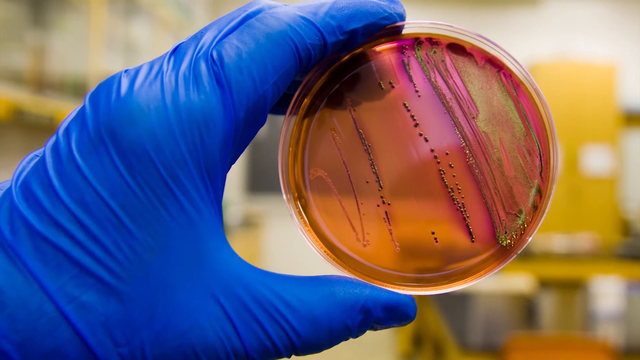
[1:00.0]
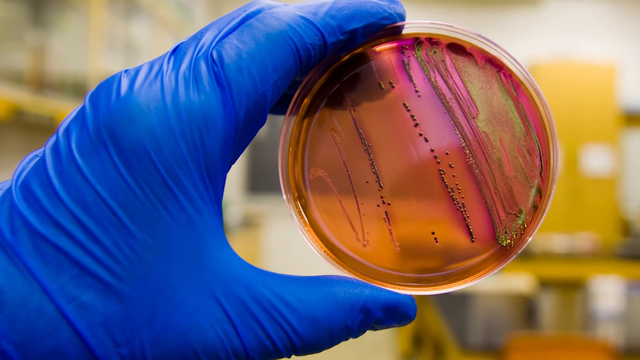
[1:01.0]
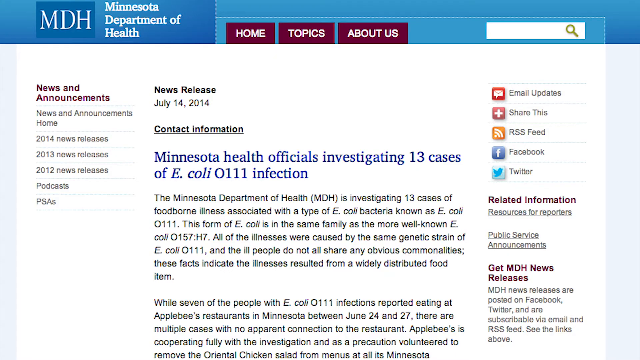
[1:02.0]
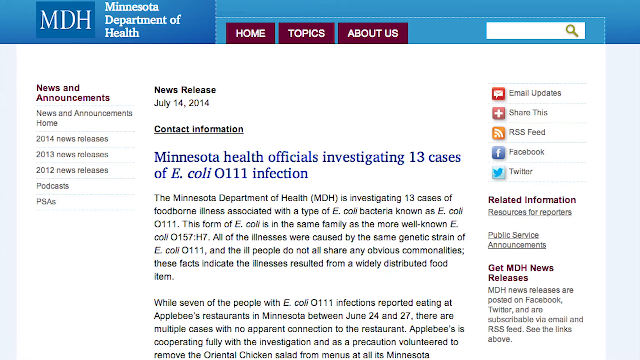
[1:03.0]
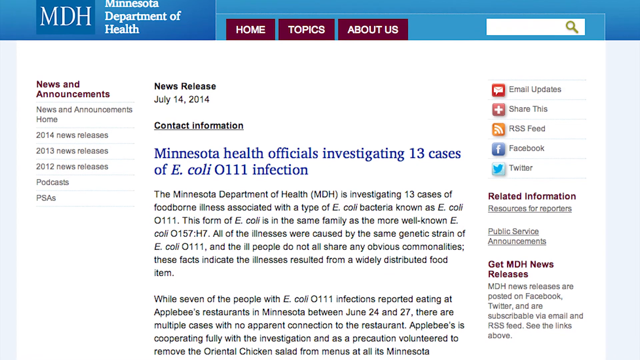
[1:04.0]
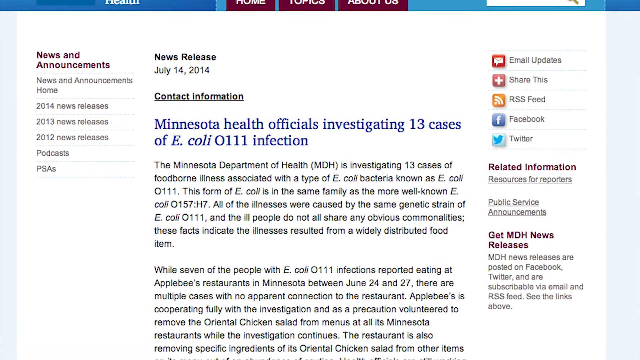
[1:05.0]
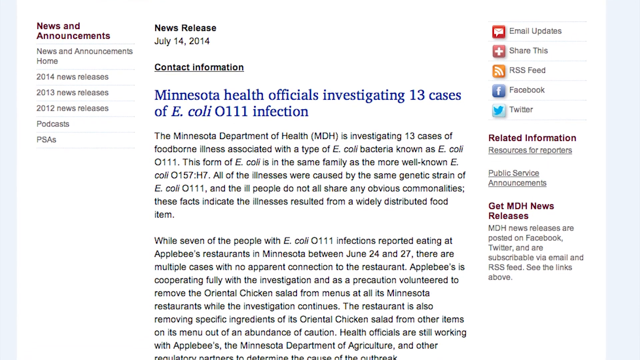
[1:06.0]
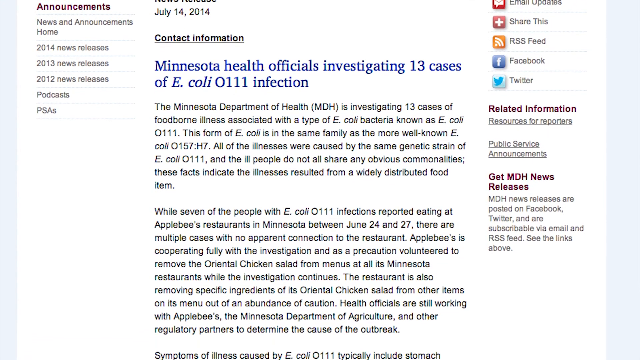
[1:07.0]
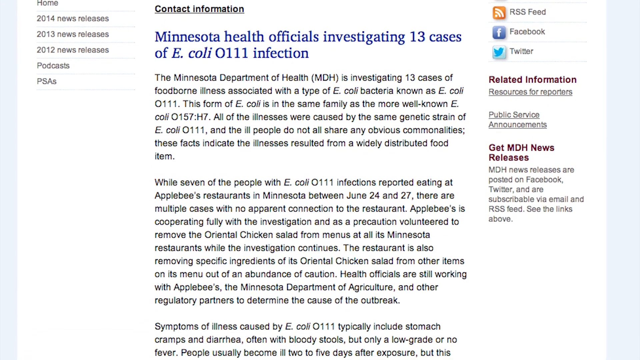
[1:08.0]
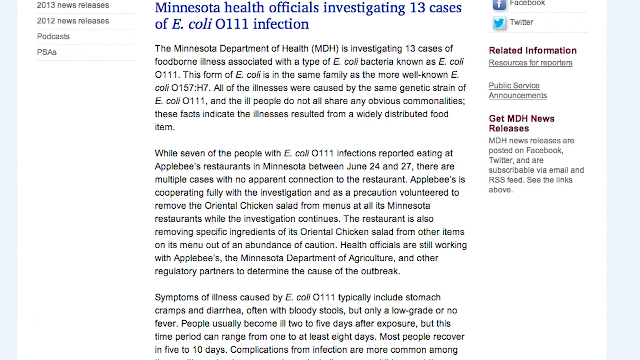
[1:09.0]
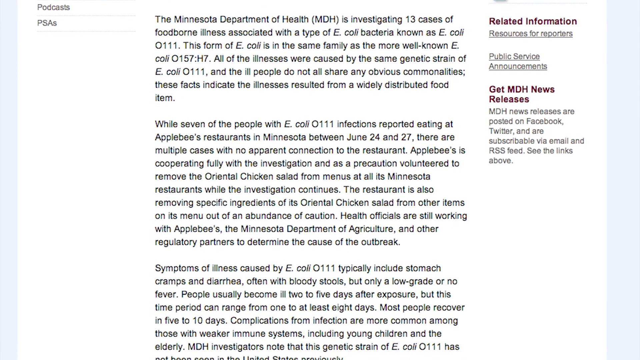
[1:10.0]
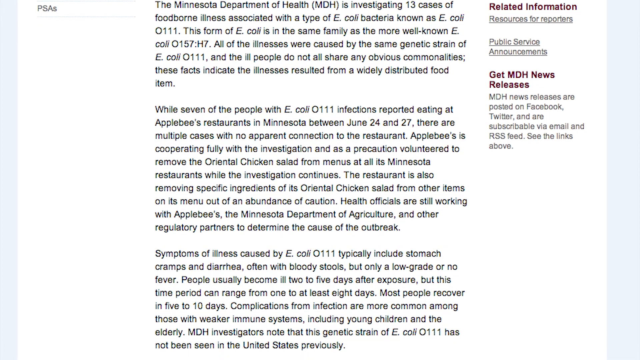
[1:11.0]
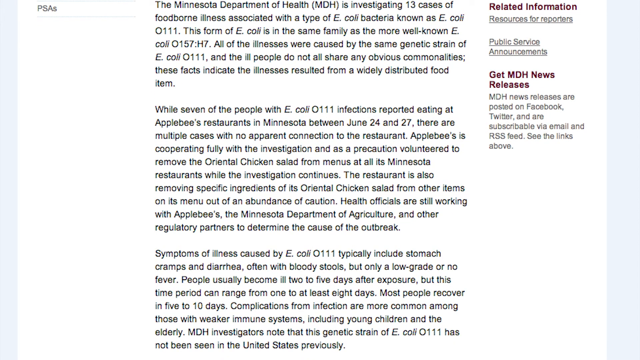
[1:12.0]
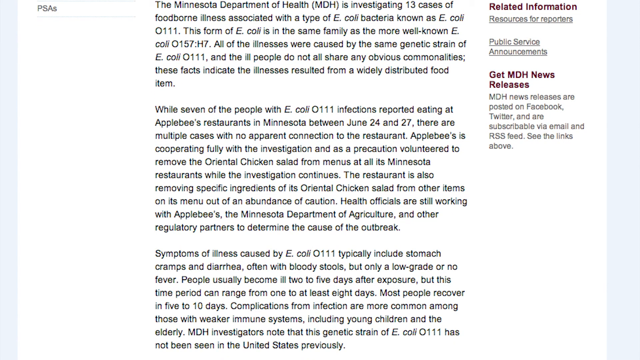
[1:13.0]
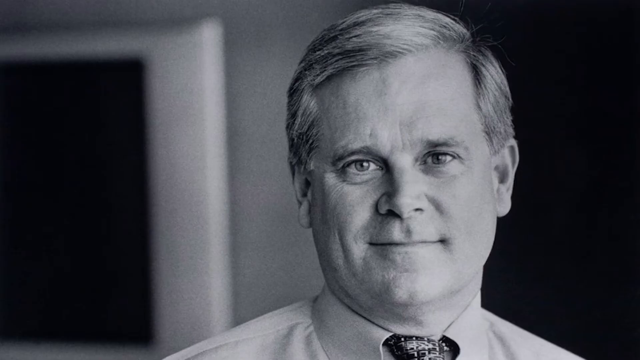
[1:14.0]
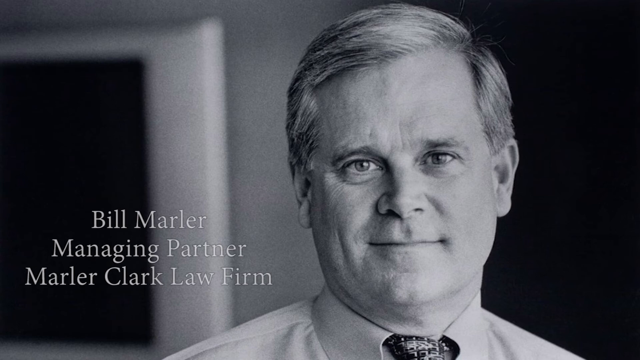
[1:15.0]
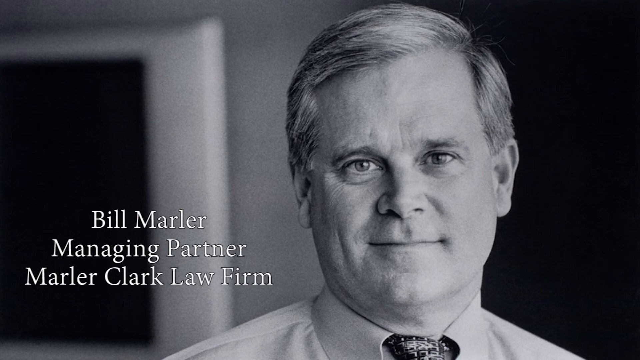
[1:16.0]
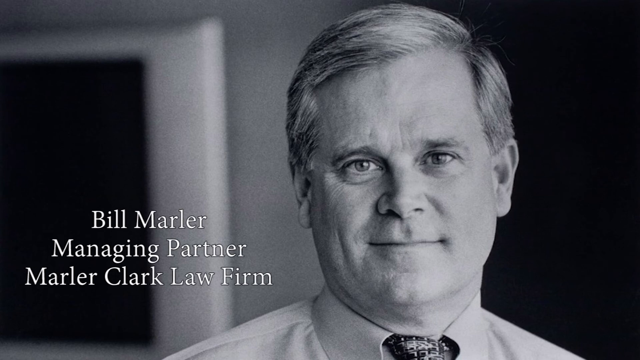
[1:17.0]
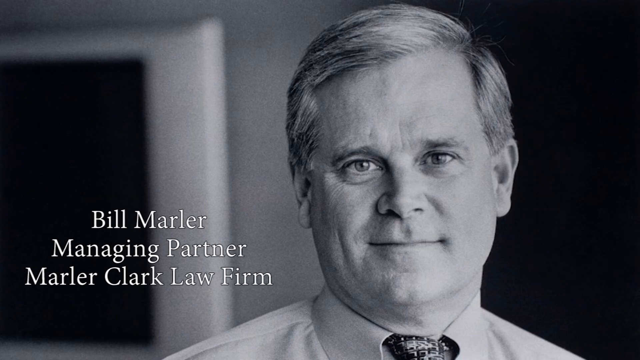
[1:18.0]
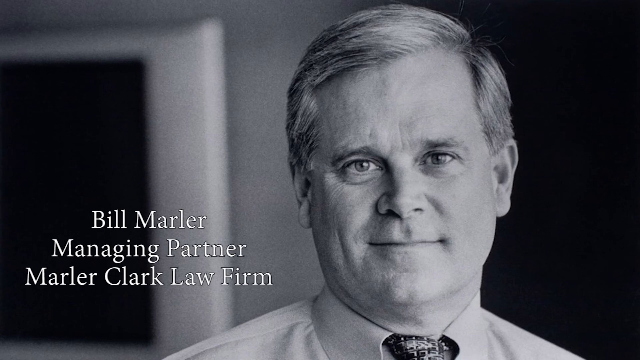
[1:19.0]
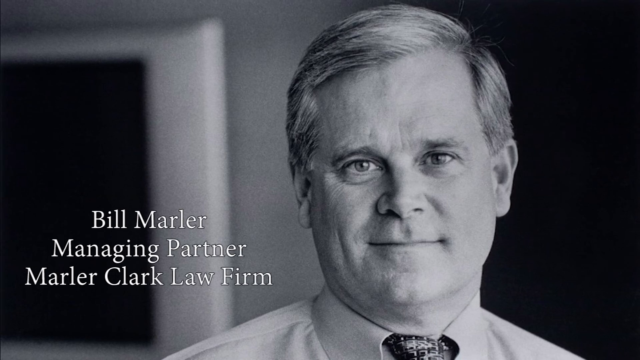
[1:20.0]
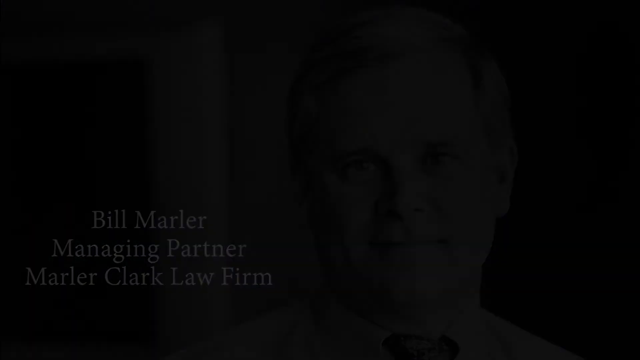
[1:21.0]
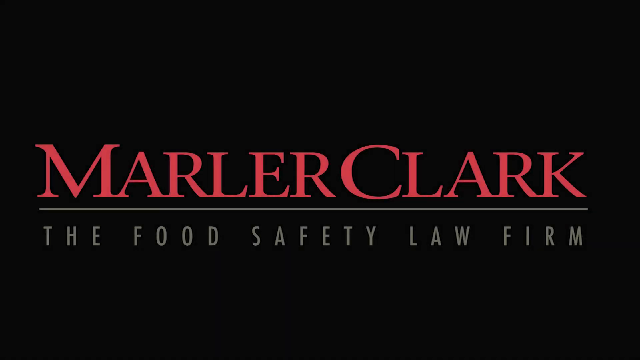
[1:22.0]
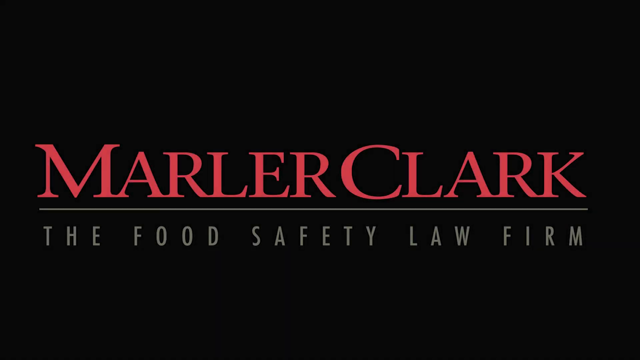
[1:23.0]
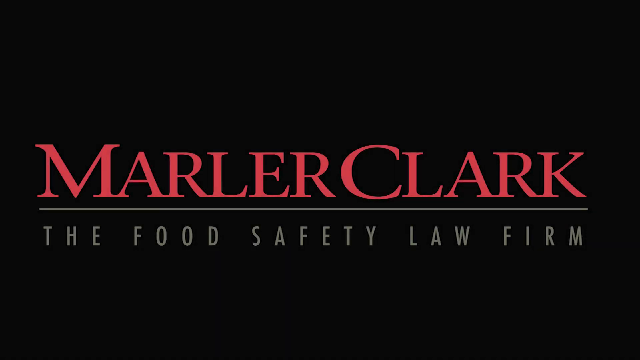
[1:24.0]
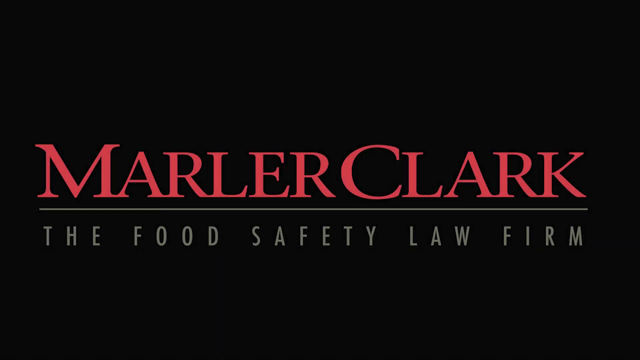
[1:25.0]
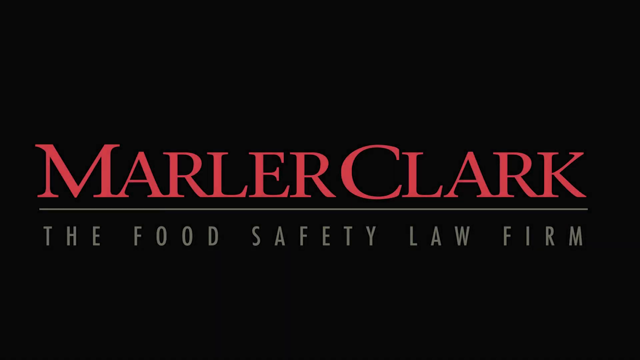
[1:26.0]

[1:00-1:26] The Minnesota Department of Health website appears. The initials "MDH" are to the left of "Minnesota Department of Health," which is written on three lines in white. To the right are the menu items home, topics and about us, with a search field to the right of about us. Underneath, "news release" appears in bold, followed by the date July 14th. The release is about the E. coli 0111 infection, with a blue headline. On the left are news and announcements and archives from 2014, 2013 and 2012, plus podcasts and PSAs. The page slowly scrolls down, and the text covers the different forms, 0157 and 0111, the seven people affected, and health officials still working on it with Applebee's. A black and white close-up shot of Bill Marler follows, with text reading "Bill Marler" and "managing partner Marler Clark law firm" to the left of him, below and roughly centered. Then the Marler Clark logo appears again in close script, in red, with a bigger M and C and a faint white underline, followed by "the food safety law firm" with spacing between the words.